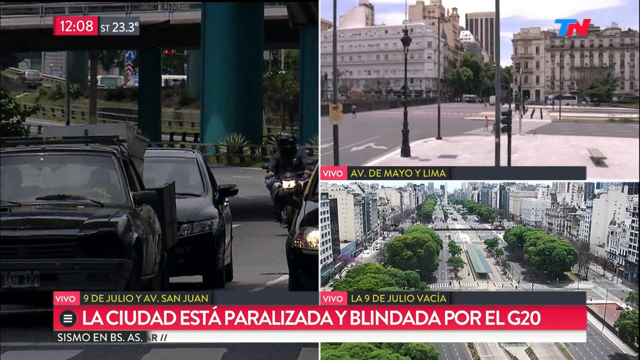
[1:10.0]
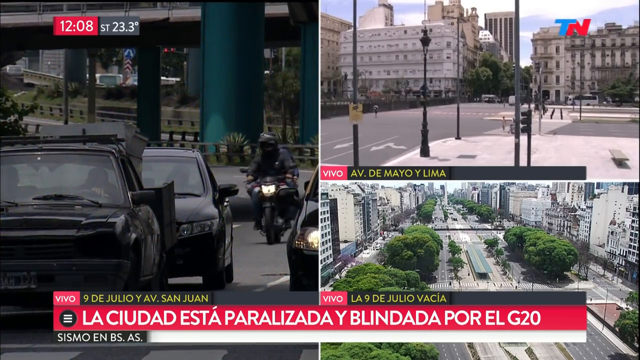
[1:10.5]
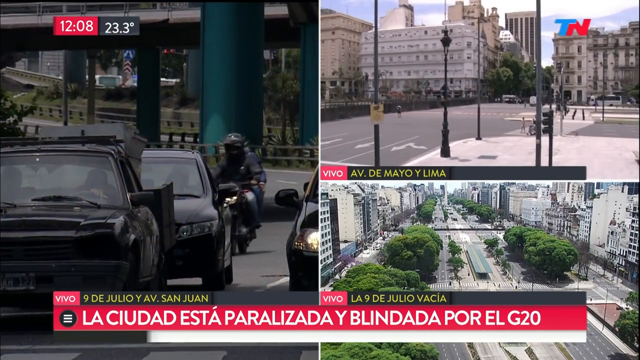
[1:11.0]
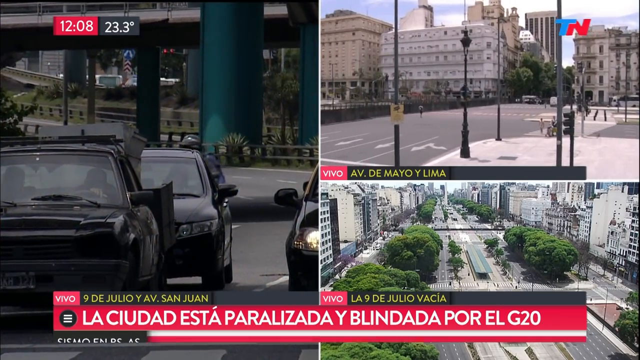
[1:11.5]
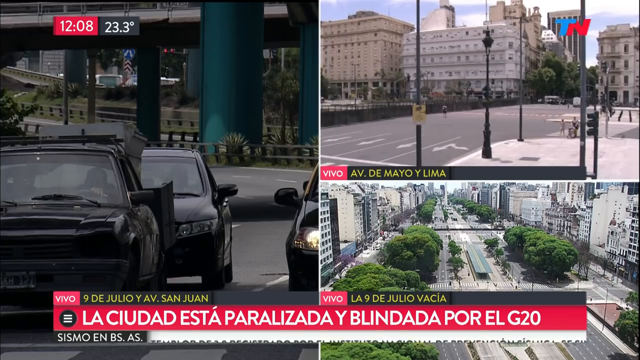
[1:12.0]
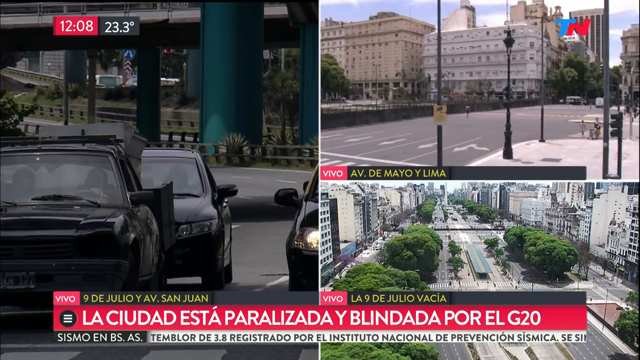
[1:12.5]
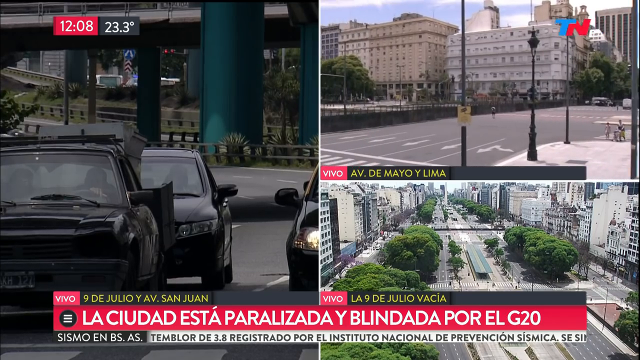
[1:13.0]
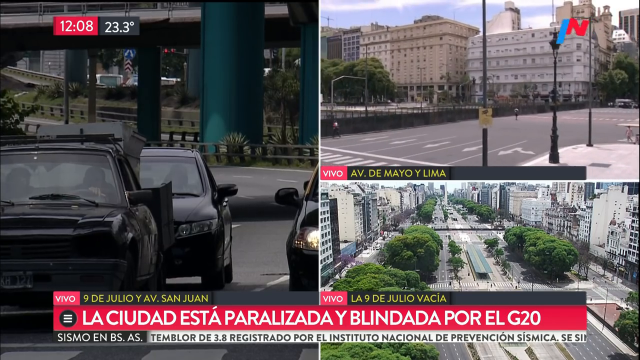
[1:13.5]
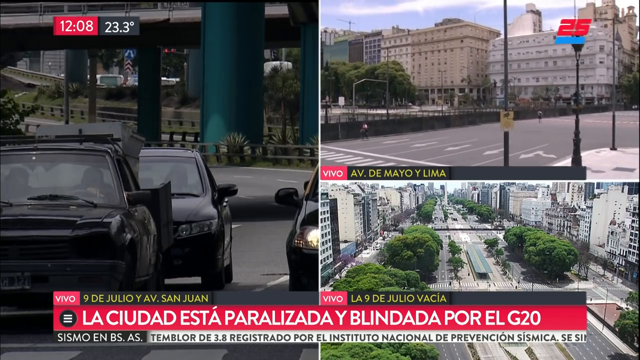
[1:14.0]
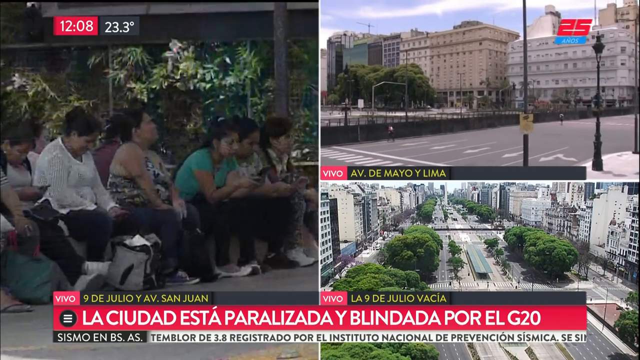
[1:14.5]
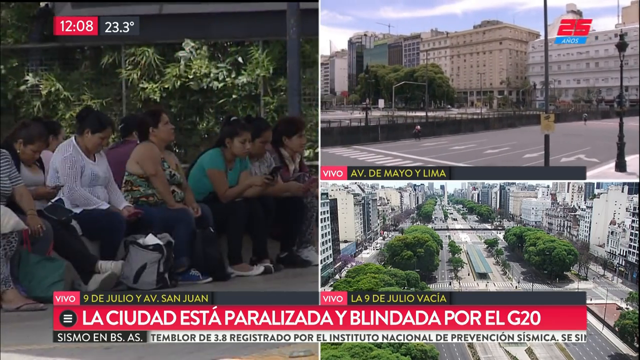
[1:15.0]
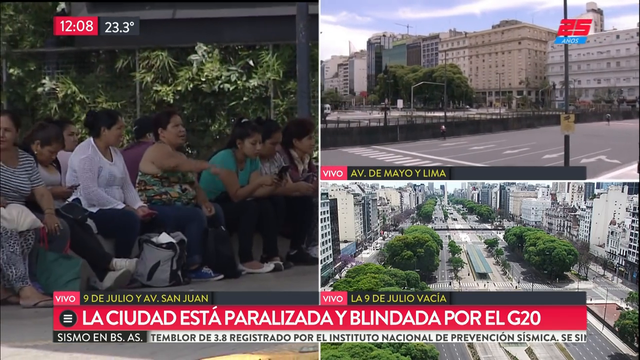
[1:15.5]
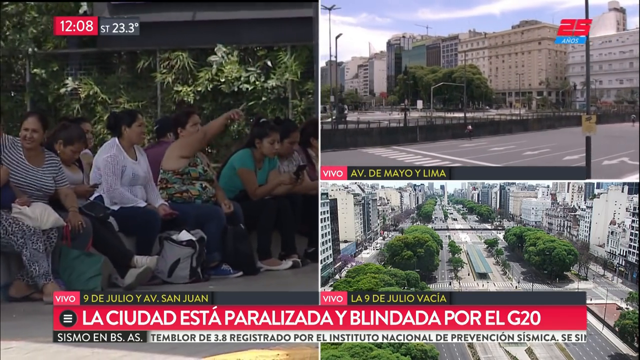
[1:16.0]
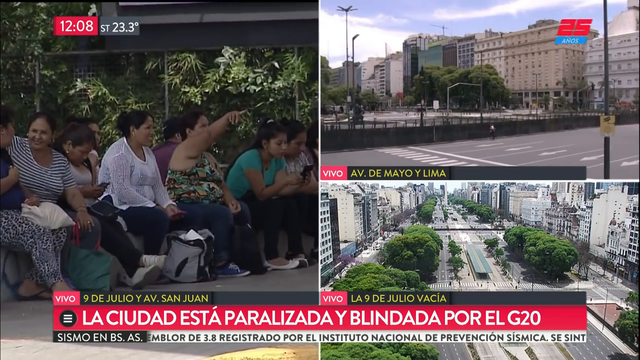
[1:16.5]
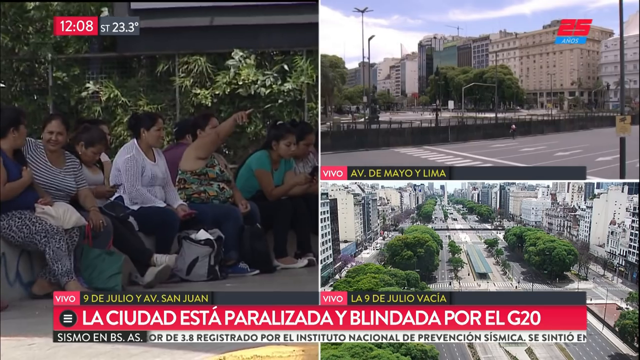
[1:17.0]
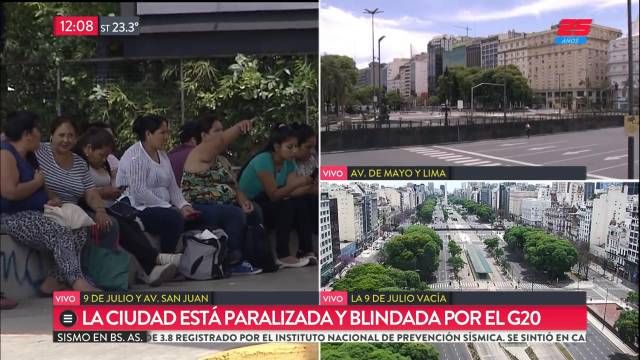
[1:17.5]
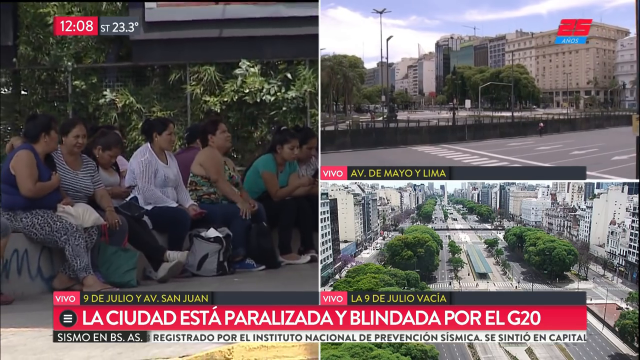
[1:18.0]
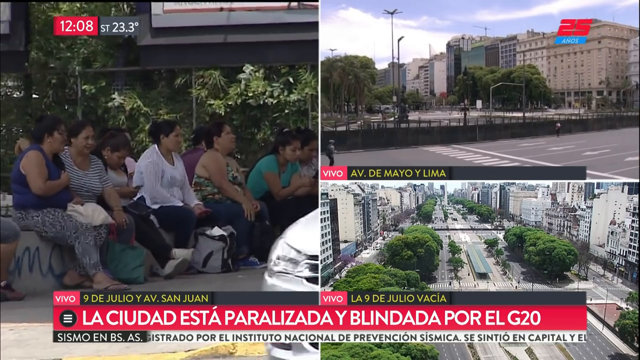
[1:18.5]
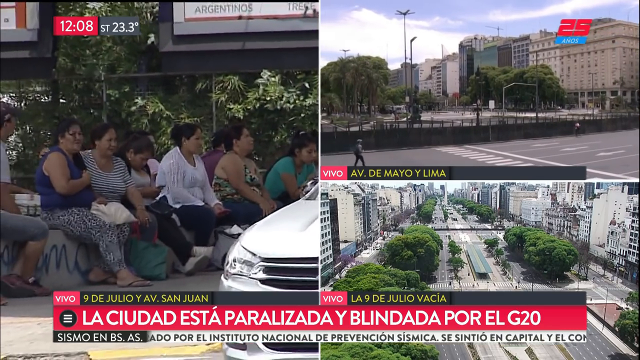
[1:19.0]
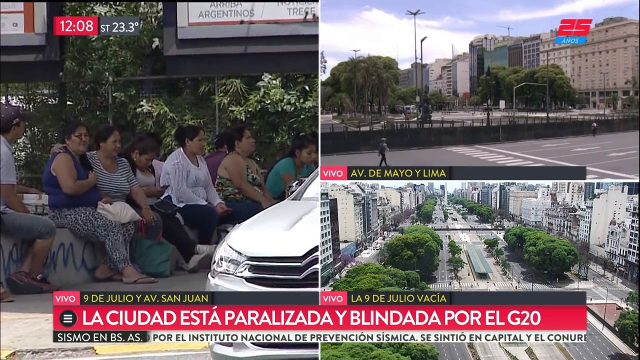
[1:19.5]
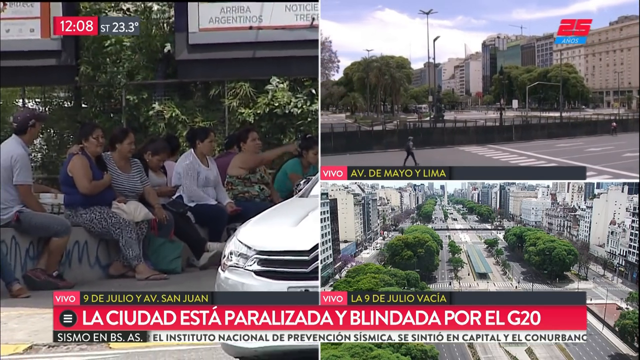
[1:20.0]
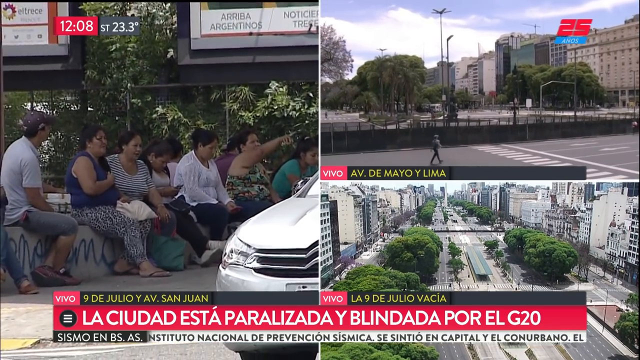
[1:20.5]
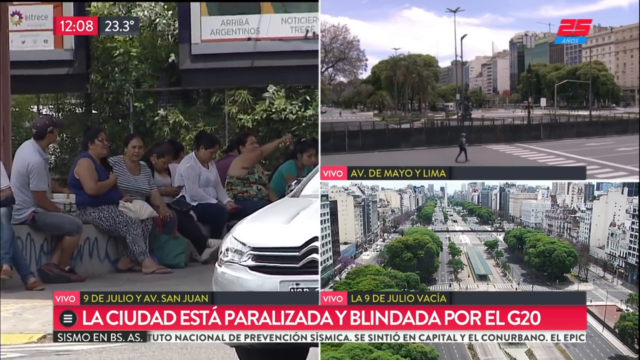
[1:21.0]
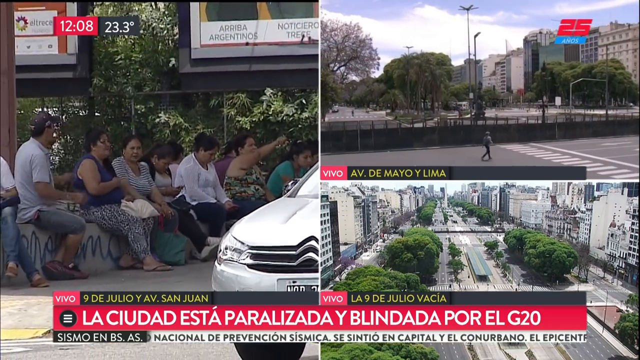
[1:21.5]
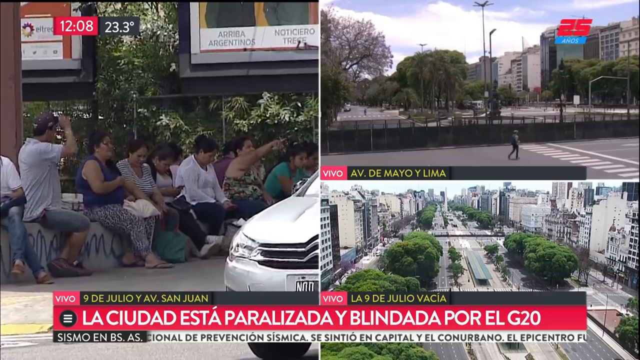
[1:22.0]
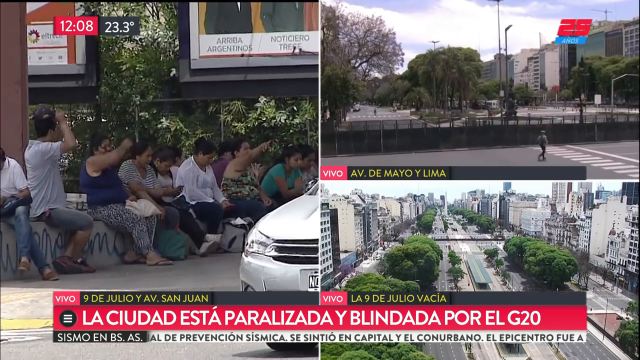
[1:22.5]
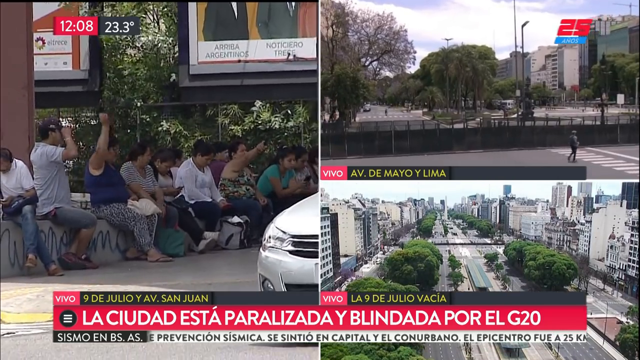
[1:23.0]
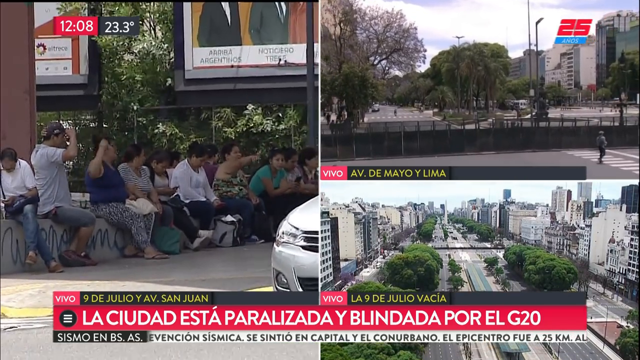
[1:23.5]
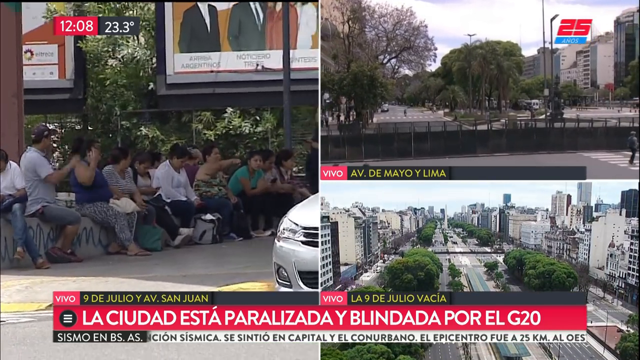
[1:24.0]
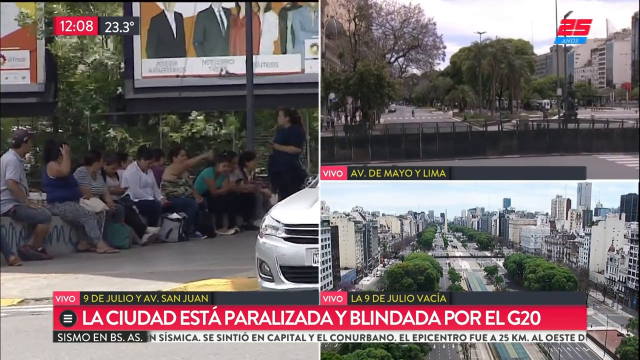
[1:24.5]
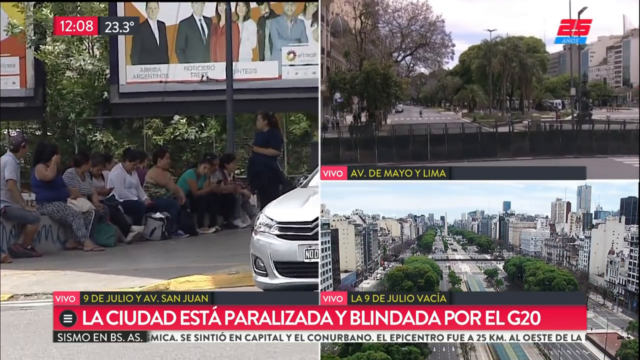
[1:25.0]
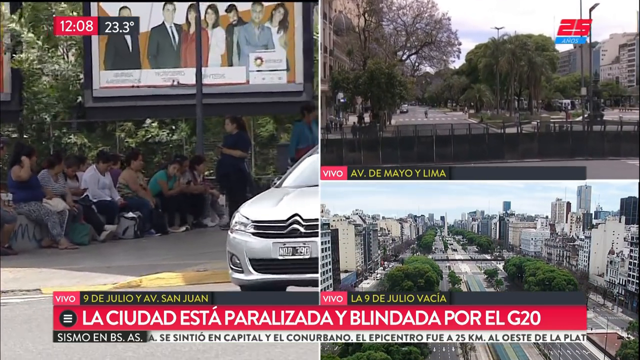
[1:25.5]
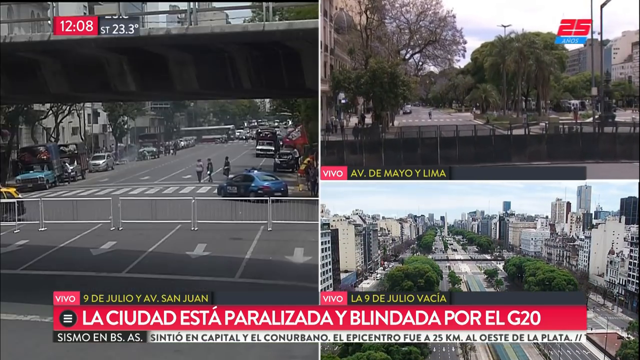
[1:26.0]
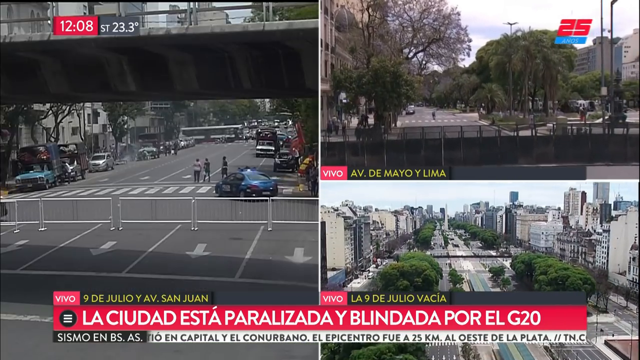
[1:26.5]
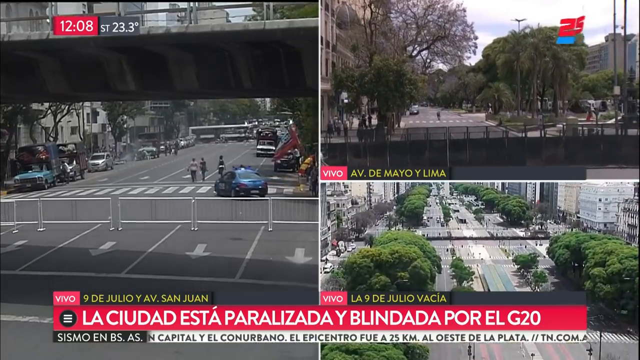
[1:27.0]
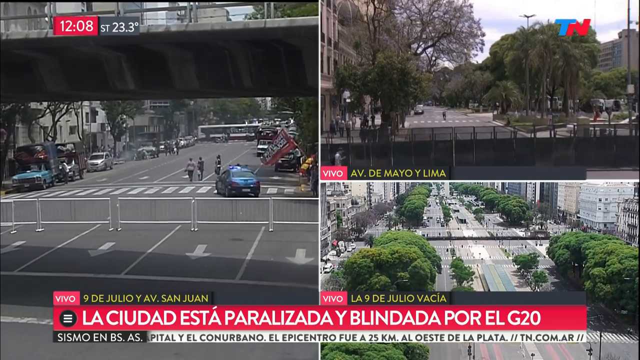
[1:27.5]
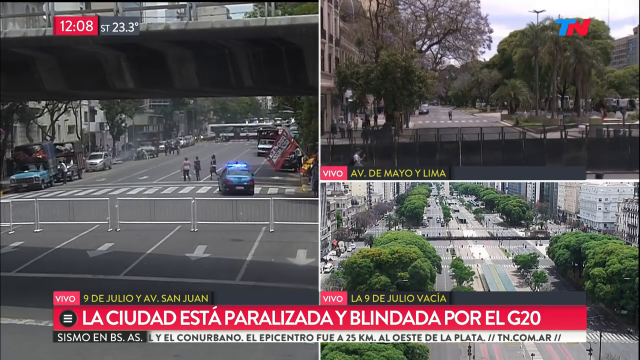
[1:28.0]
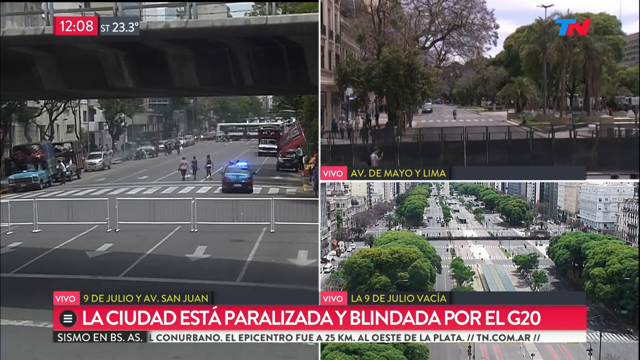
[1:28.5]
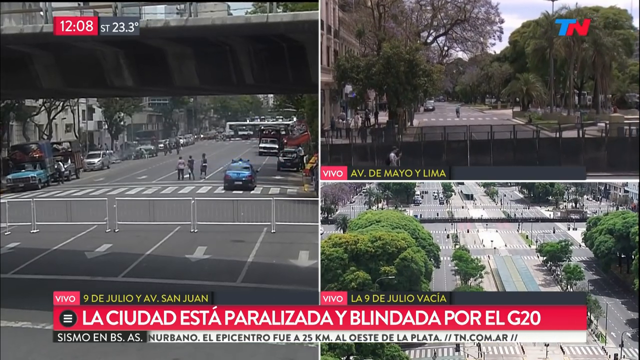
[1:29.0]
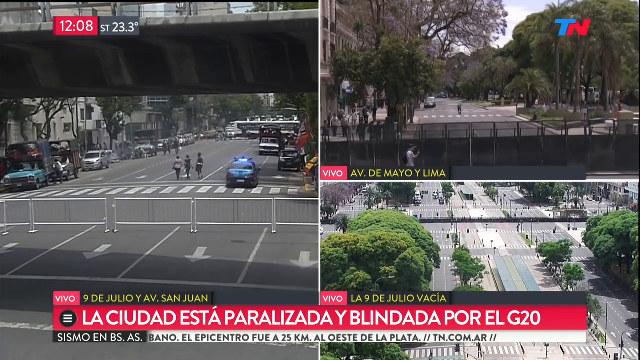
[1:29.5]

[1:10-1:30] The same three images remain: a large one on the left and two smaller rectangles stacked on the right. The left image shows cars closer up, with three cars and a motorcycle in the back driving under a bridge, and walls or concrete gates along the edge. On the right is what appears to be a large city, with poles, an area where people can sit and view the city, and lights. There are buses, but not many vehicles on this road, and very few people; it is pretty much the same image as before. In the left image, a motorcycle comes up, looking like it goes to the center and passes people. A group of people sit on the side with their lunch boxes, as if waiting for something, and it almost looks like somebody is crying. The top right image gets closer to the trees, showing more people walking behind the area that appears to be closed off.